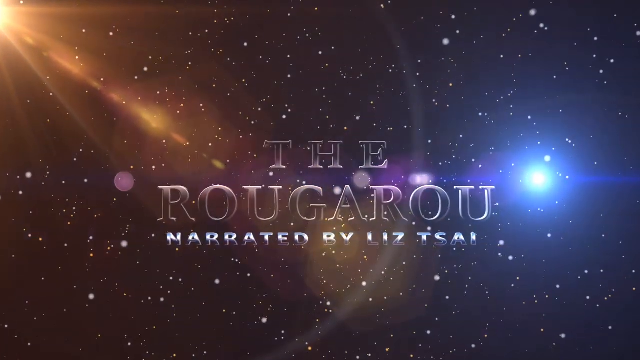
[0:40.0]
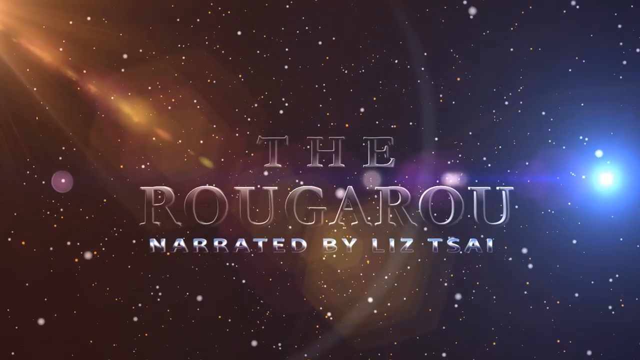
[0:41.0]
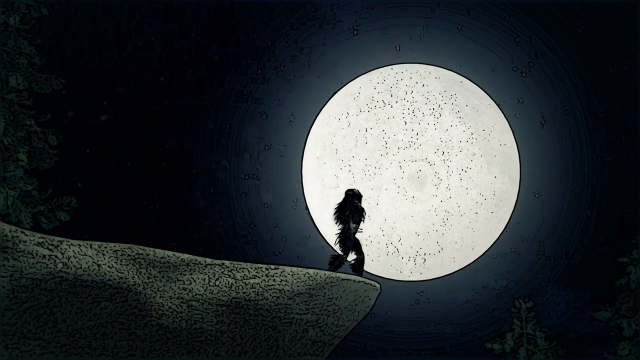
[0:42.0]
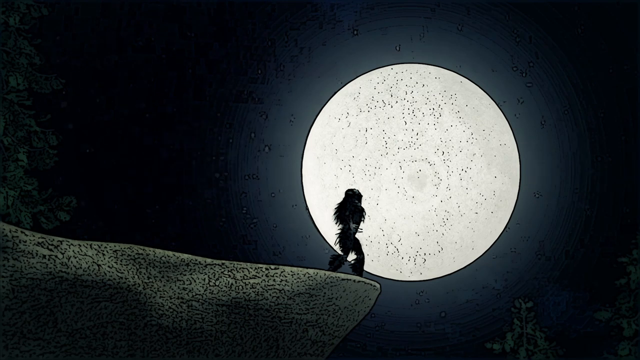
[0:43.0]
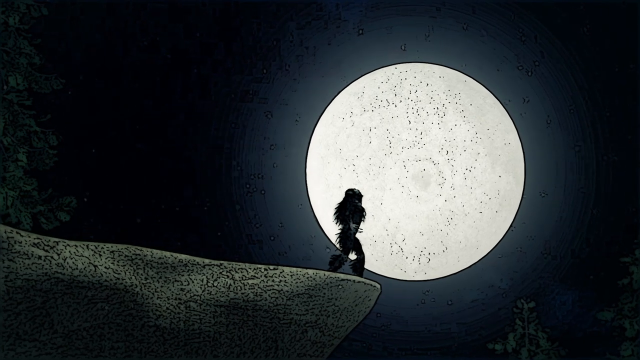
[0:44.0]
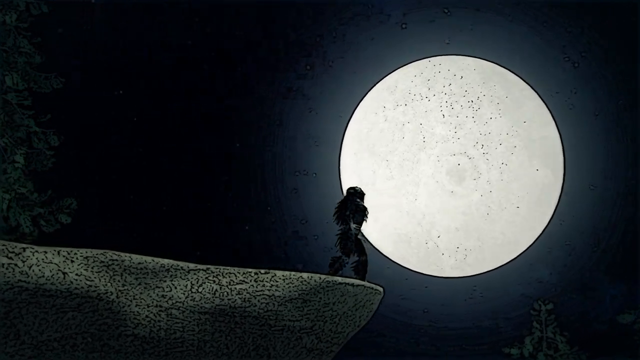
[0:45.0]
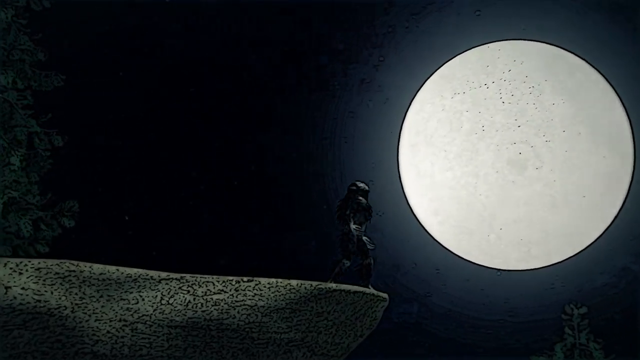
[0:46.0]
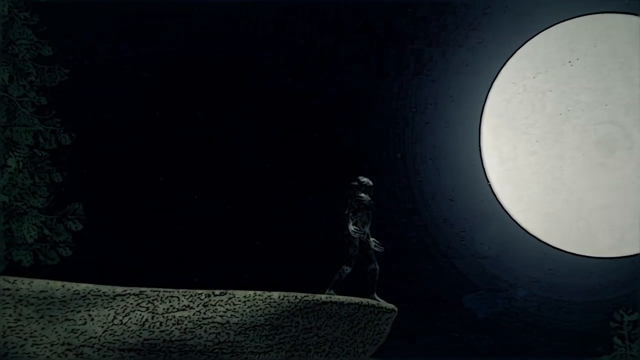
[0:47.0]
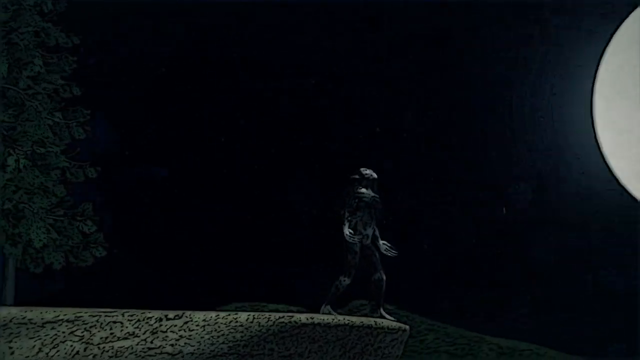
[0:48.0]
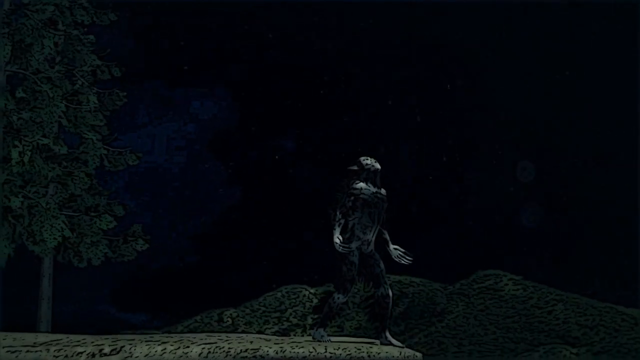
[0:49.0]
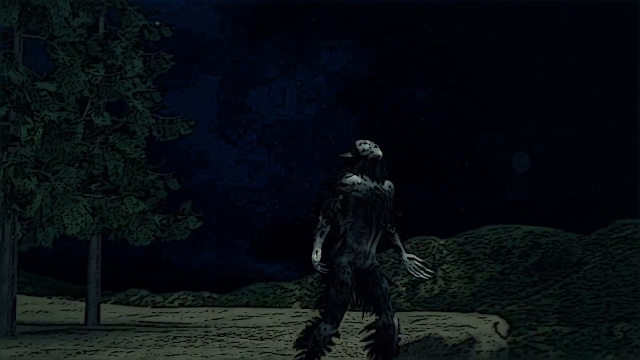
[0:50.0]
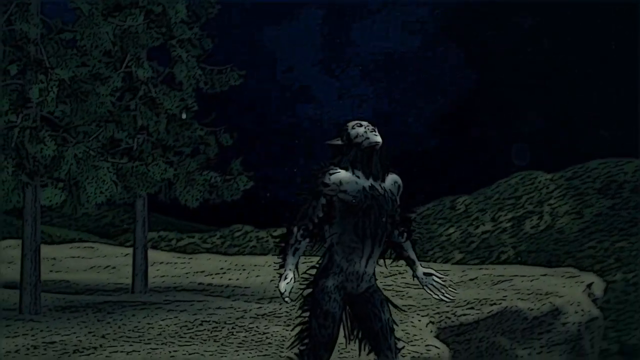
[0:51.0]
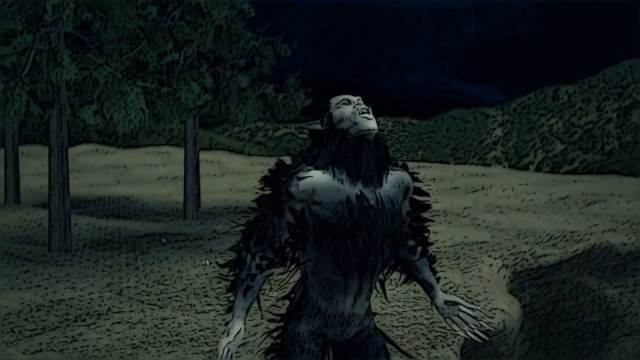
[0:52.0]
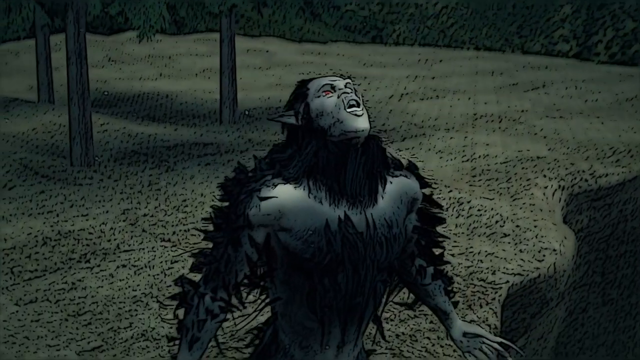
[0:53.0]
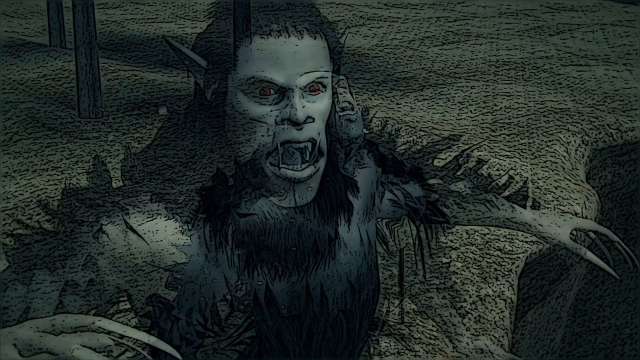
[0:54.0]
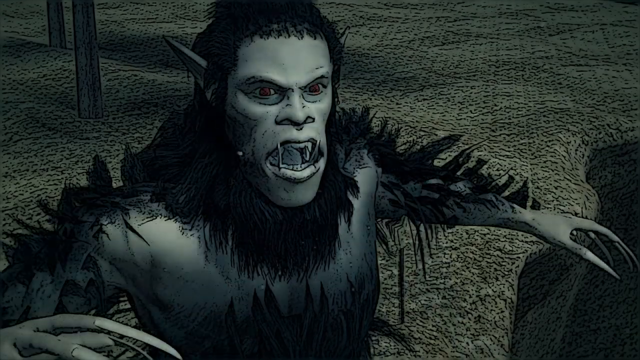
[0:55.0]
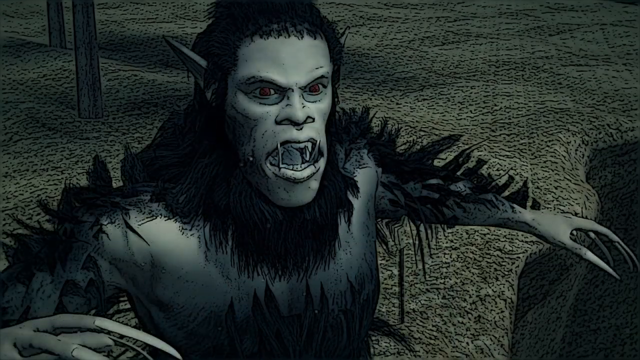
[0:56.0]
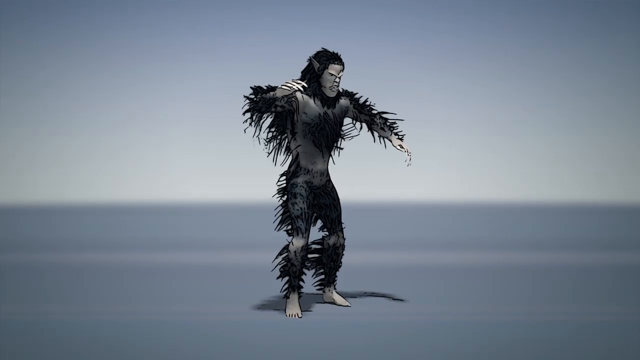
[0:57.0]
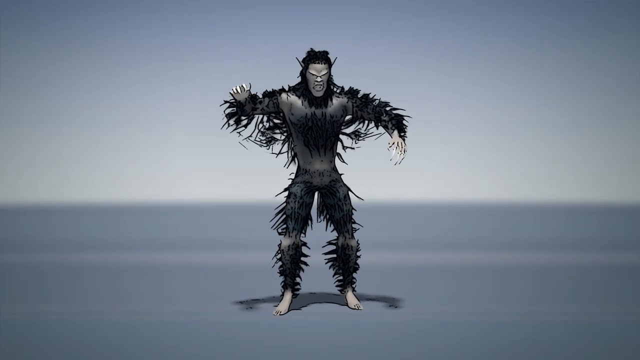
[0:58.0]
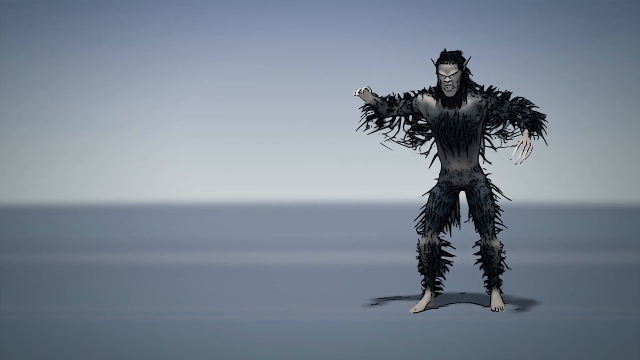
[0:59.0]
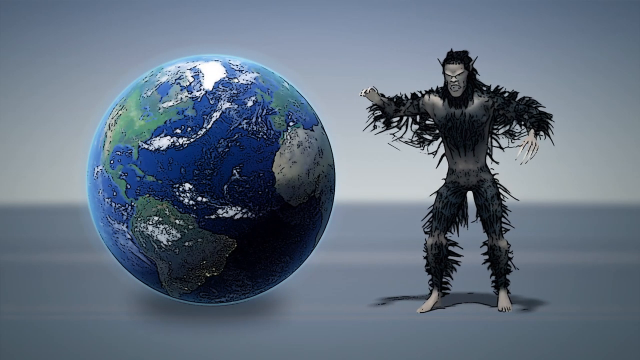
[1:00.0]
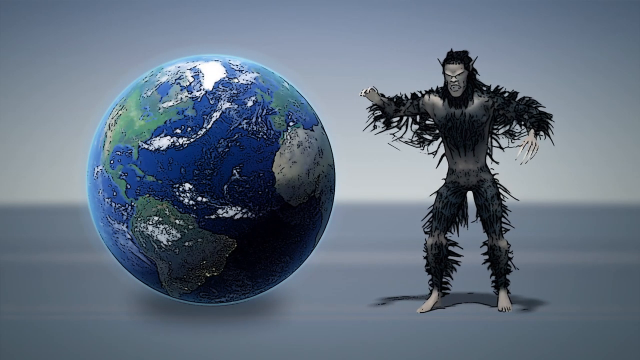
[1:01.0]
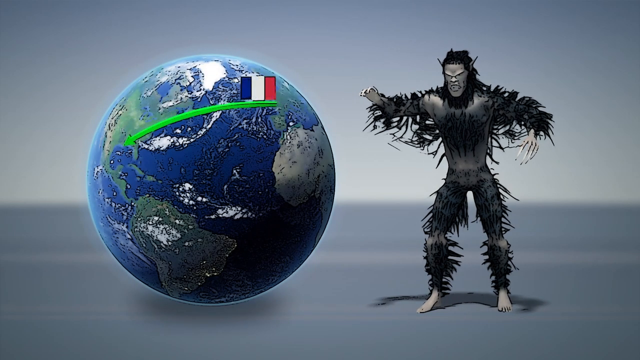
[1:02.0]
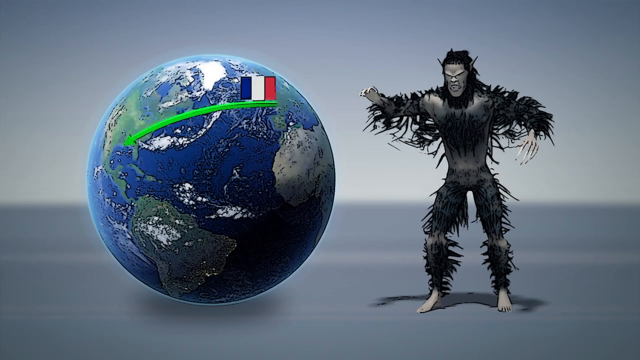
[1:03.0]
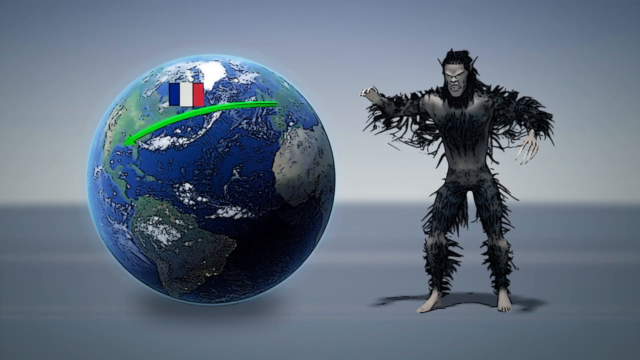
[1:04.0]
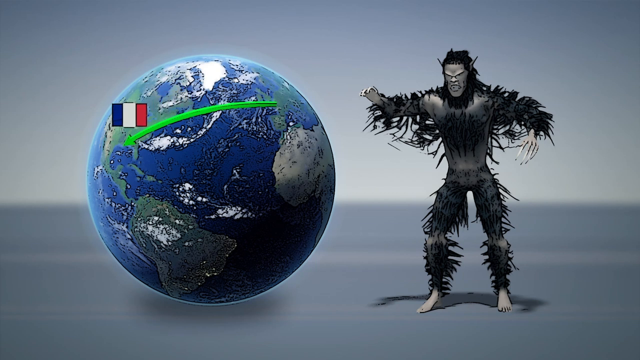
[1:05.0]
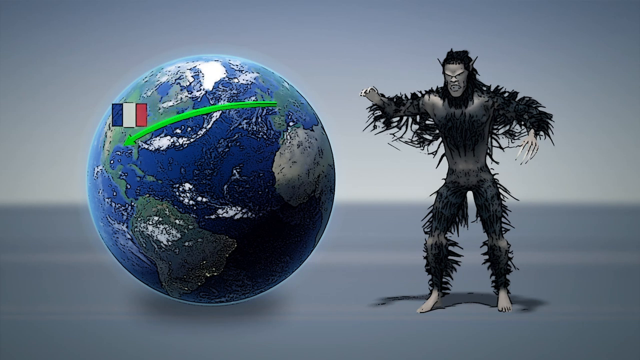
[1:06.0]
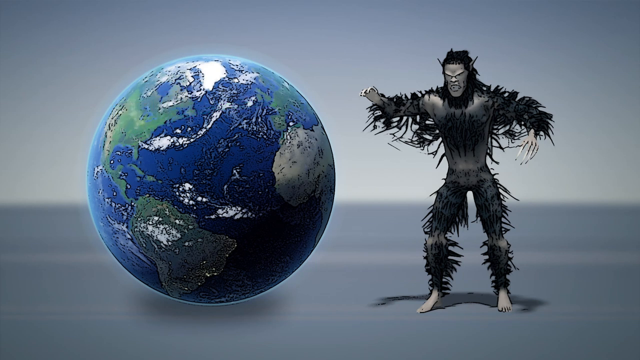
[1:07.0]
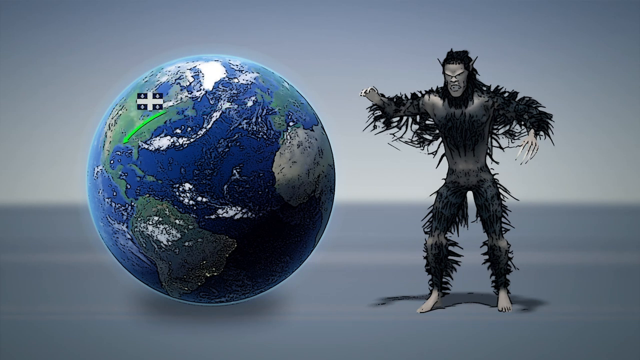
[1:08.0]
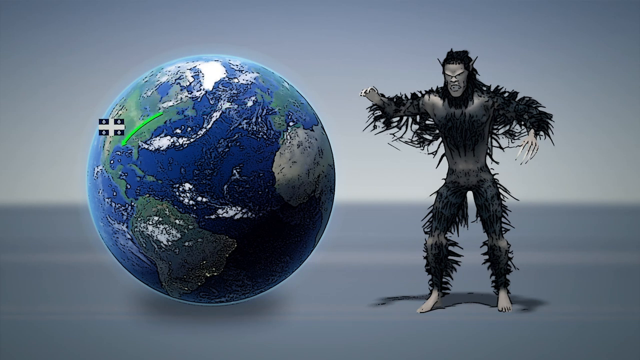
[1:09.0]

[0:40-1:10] Text reads "the Ragnarok" and "by Liz Tissaia". A space-like view kind of zooms in. A werewolf is in front of a moon, off a cliff. It is very dark, and the only light is the moon; the werewolf appears in silhouette. In CGI, the view spins around the werewolf standing there, looking up at the moon with its mouth open as if howling. Another picture of the werewolf follows, apparently a CGI model of him. A CGI model of the world shows an arrow from France to the Americas, around Louisiana. Another flag points down south, apparently toward the Louisiana and Alabama swampy bayou area. The werewolf model is on the right-hand side, next to the model of the world with the flags pointing.